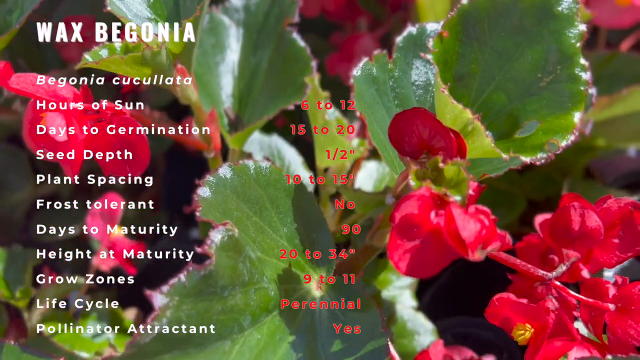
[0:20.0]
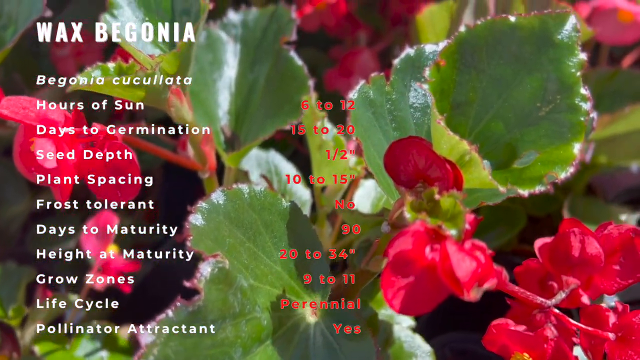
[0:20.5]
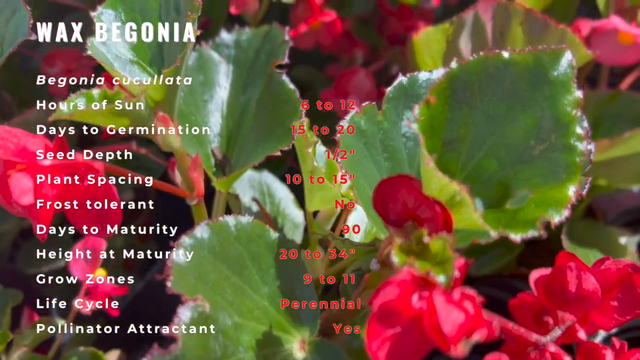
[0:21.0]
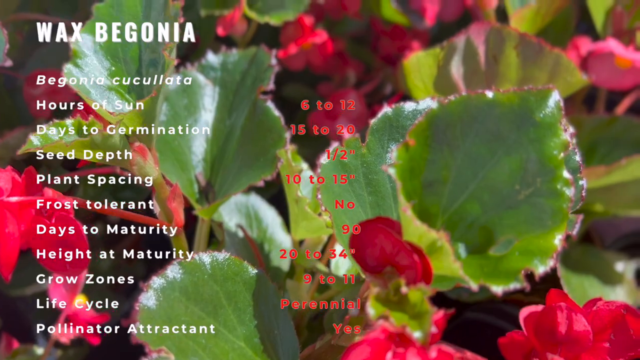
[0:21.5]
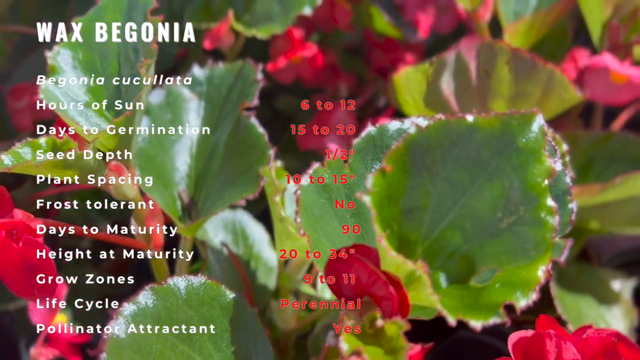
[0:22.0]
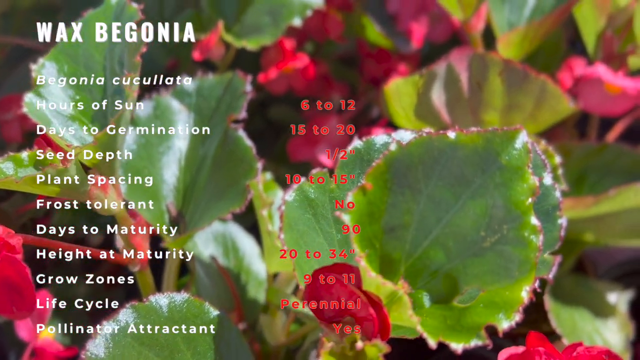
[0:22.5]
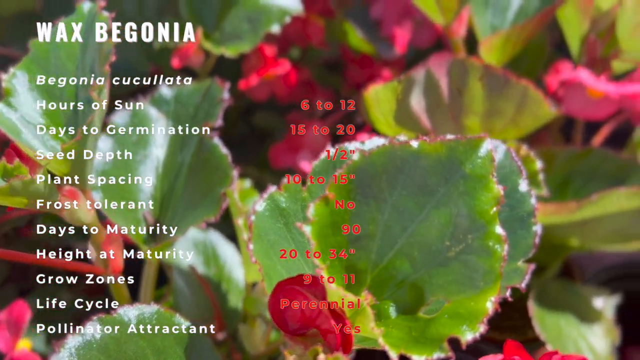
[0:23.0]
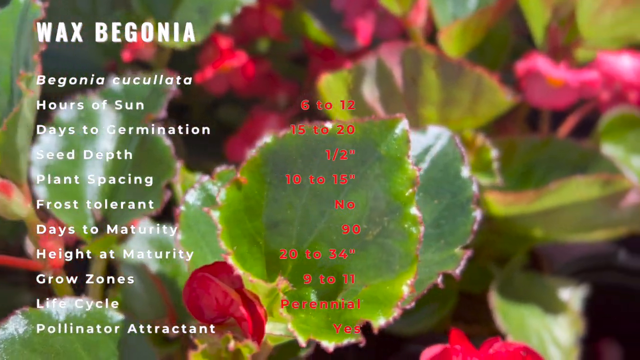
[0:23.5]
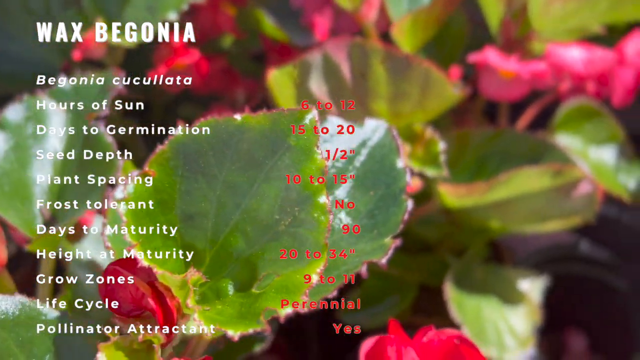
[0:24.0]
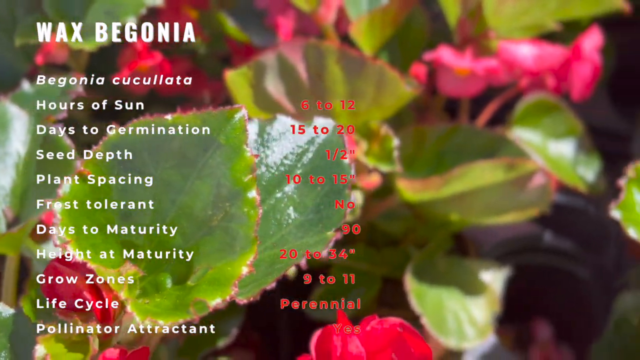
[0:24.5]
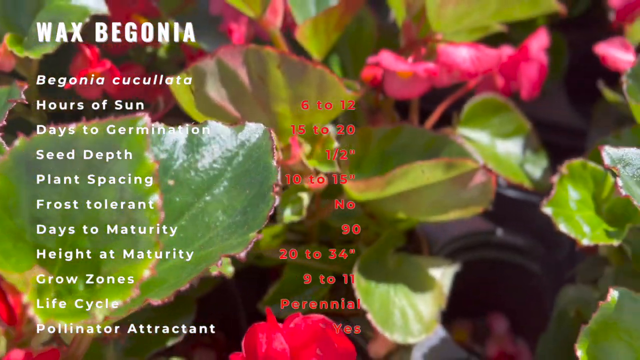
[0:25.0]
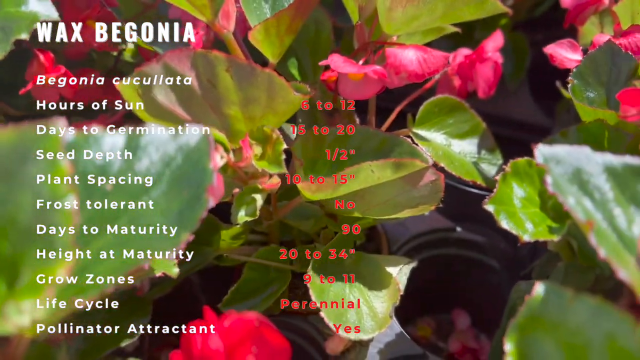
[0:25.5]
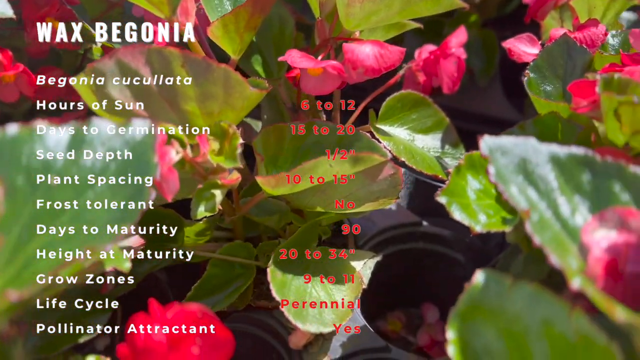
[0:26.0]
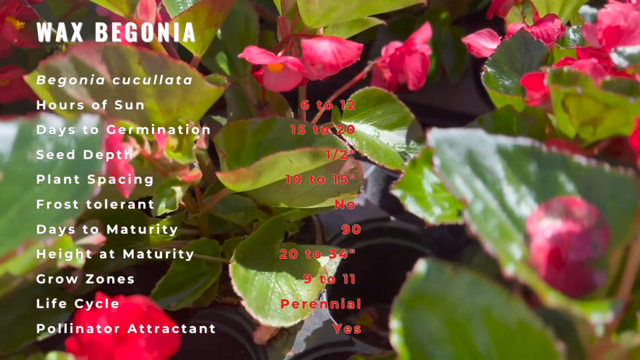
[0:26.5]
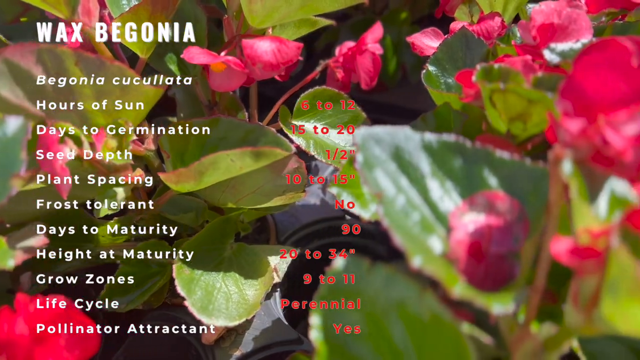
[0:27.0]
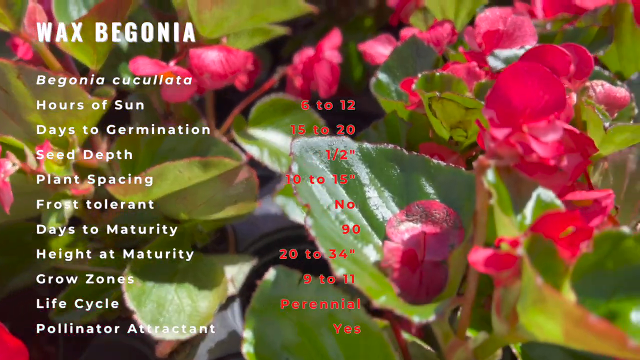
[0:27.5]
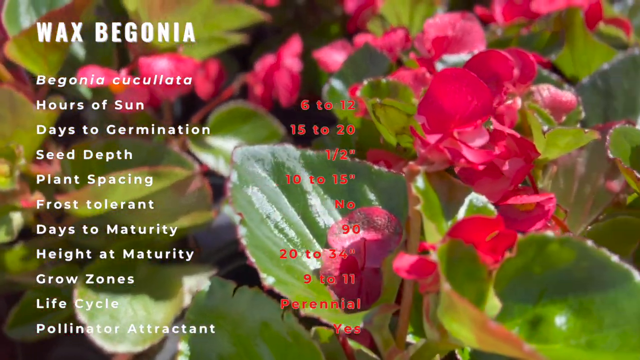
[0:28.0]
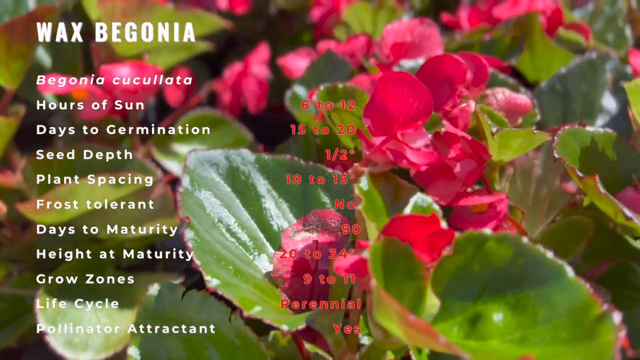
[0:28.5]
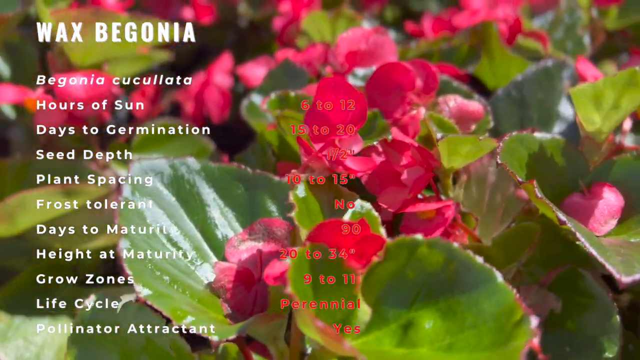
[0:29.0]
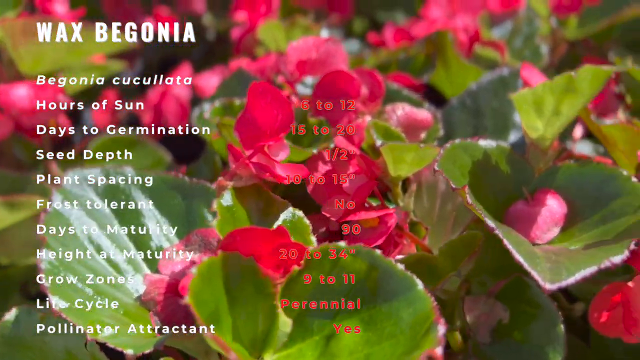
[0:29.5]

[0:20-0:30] Bright pink-red flowers appear with green leaves attached to them, outdoors and very zoomed in, so that nothing but the leaves and flowers is visible; sunlight falls on them. White text reads "wax begonia, begonia cuculata, hours of sun, days to germination, seed depth, plant spacing, frost tolerant, days to maturity, height at maturity, and growth zones." On the right-hand side are some numbers in red that are too low in quality to read.